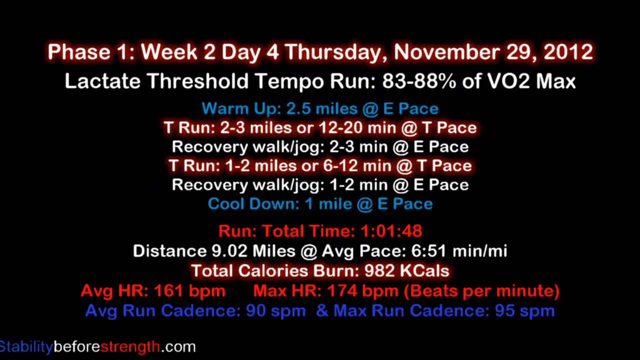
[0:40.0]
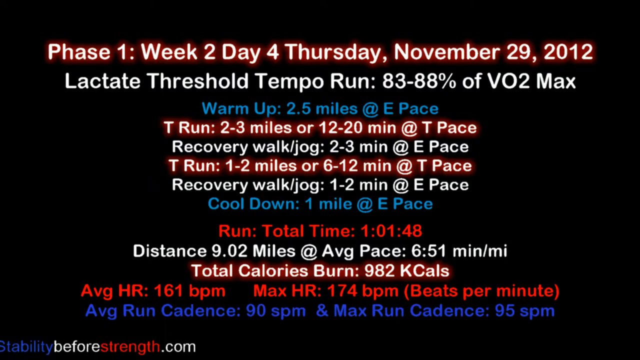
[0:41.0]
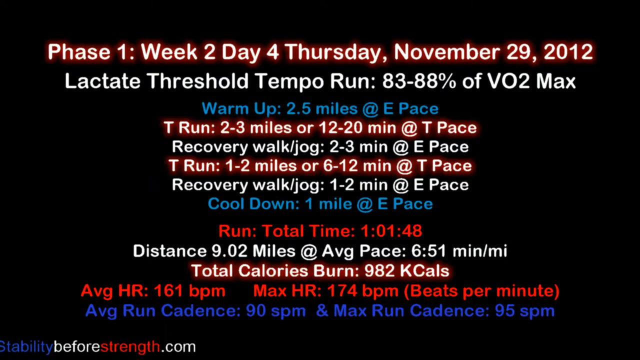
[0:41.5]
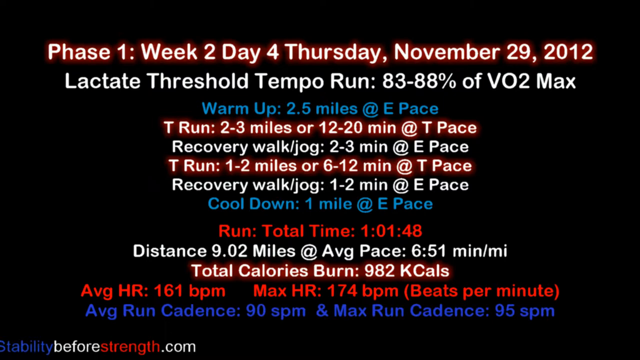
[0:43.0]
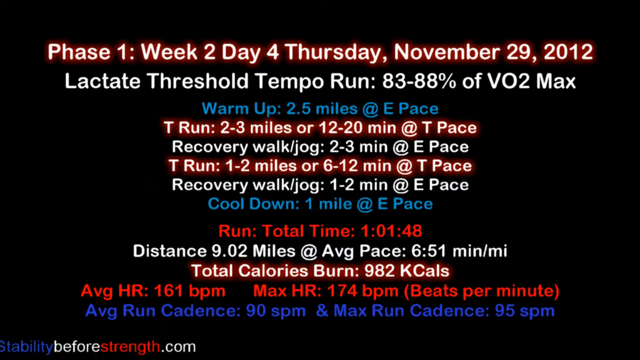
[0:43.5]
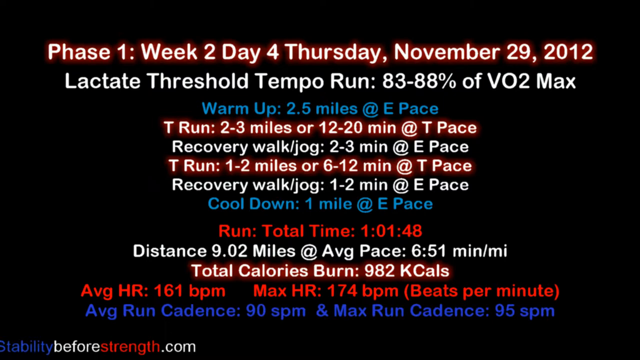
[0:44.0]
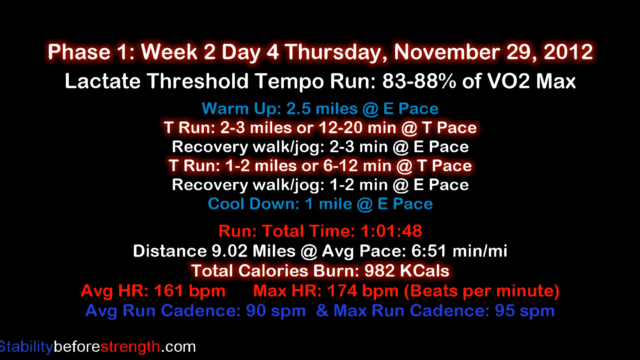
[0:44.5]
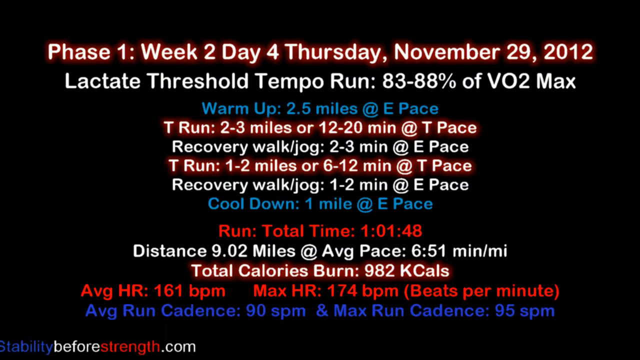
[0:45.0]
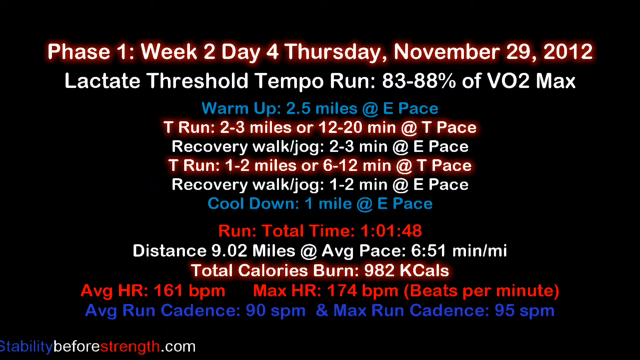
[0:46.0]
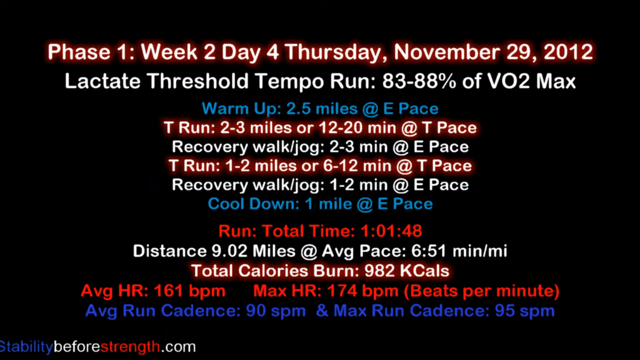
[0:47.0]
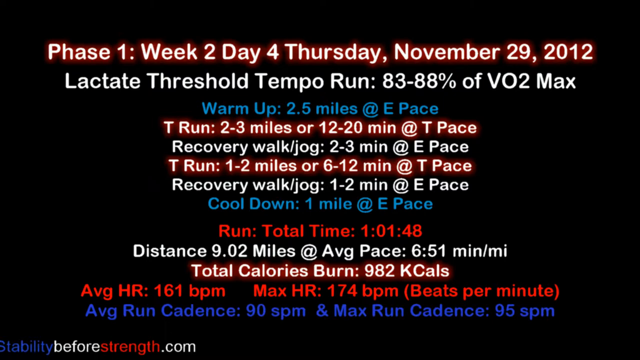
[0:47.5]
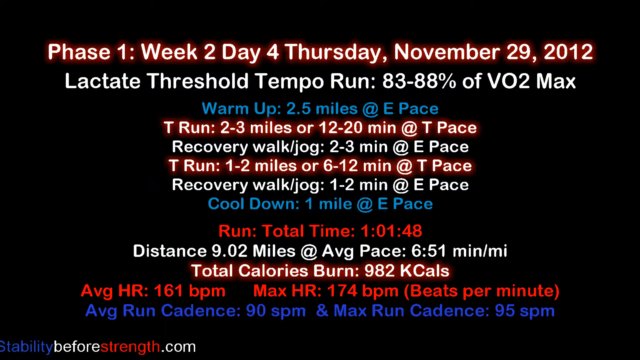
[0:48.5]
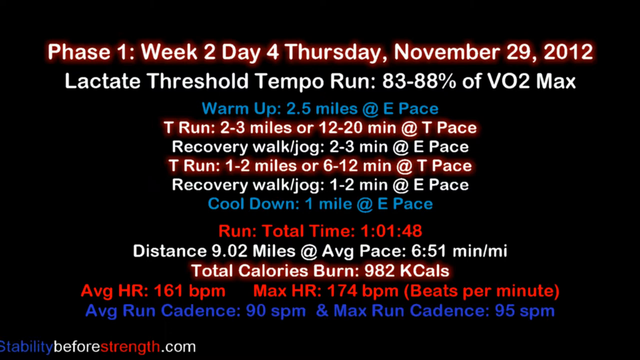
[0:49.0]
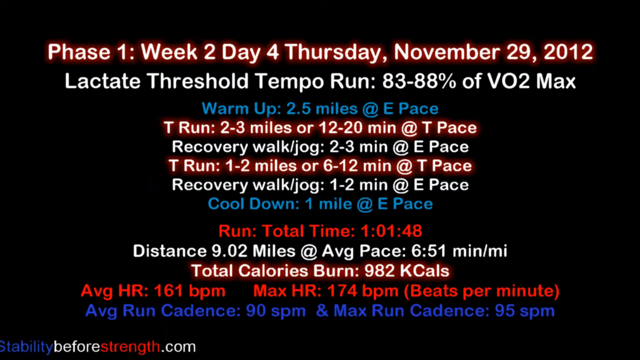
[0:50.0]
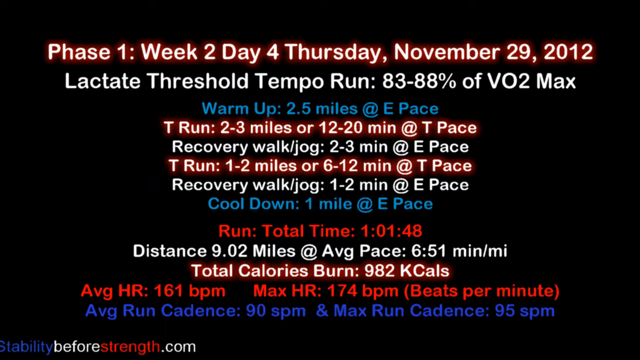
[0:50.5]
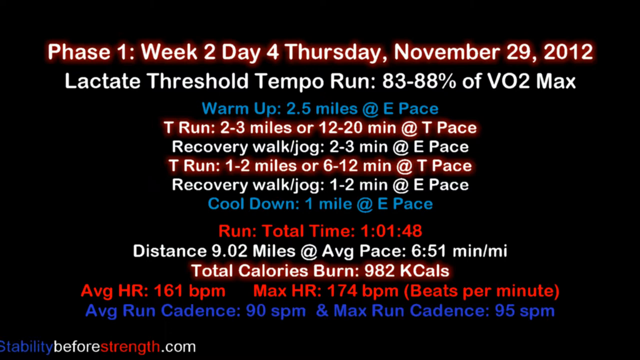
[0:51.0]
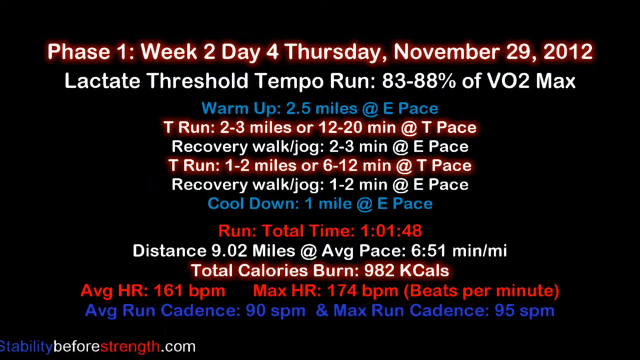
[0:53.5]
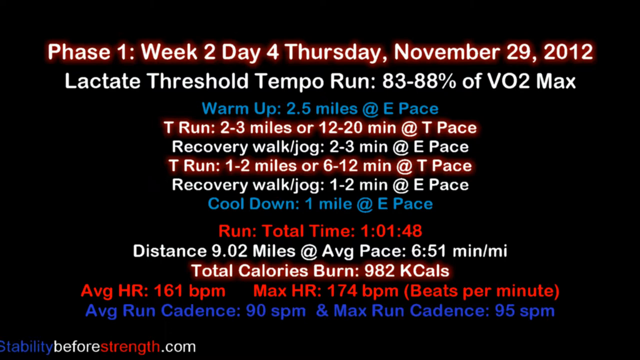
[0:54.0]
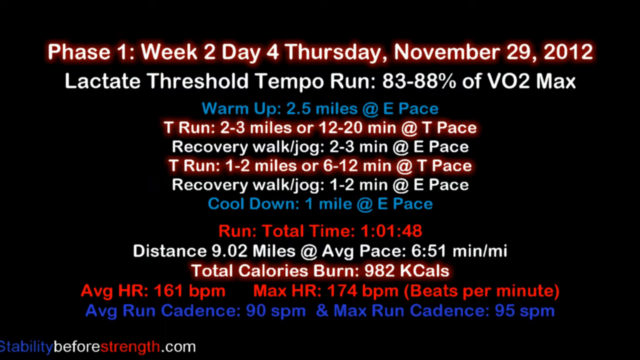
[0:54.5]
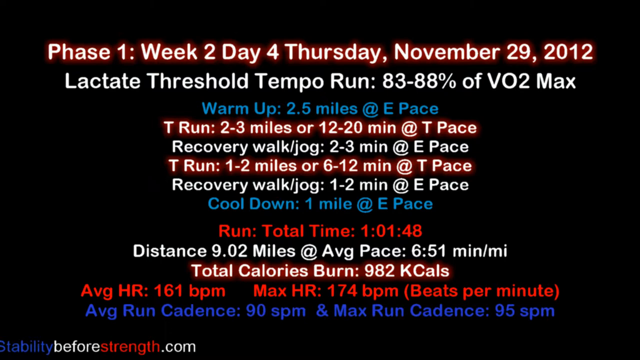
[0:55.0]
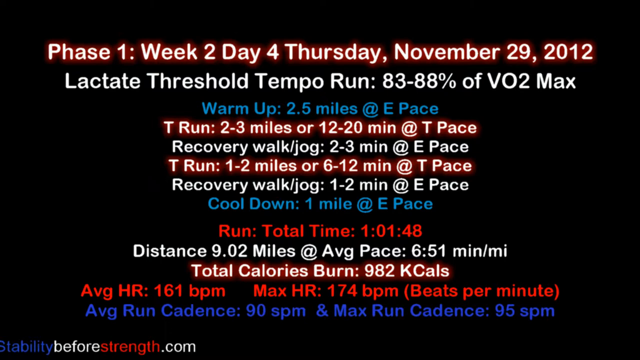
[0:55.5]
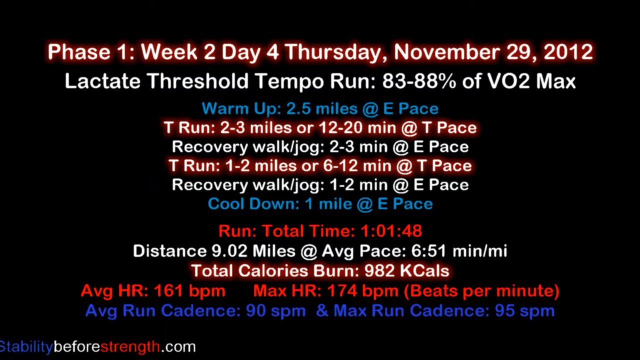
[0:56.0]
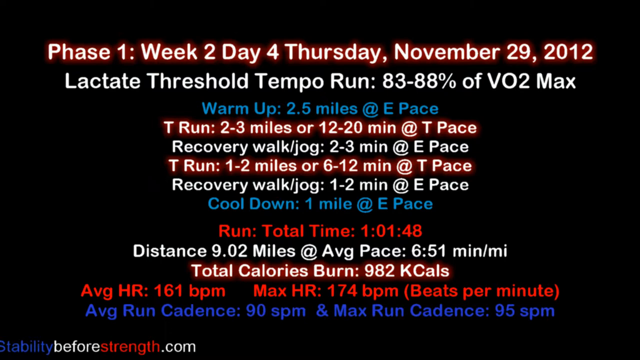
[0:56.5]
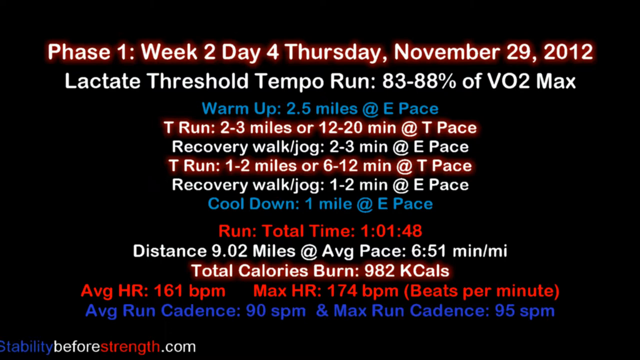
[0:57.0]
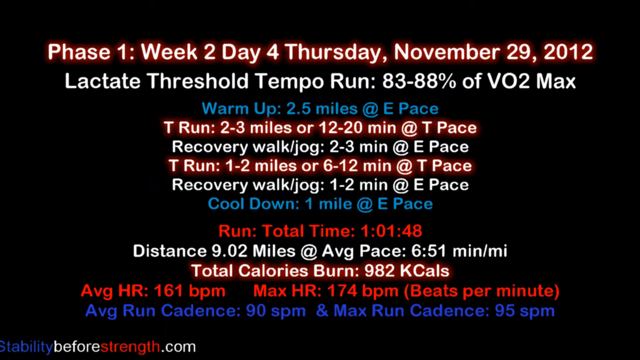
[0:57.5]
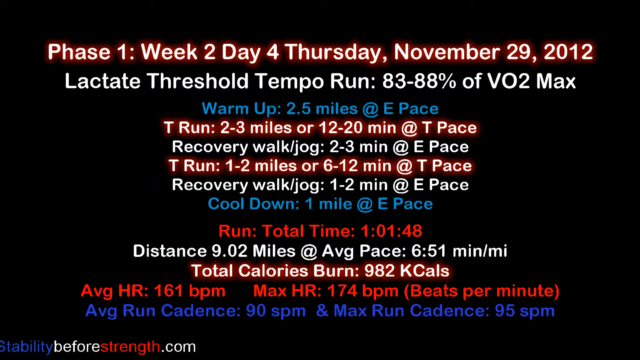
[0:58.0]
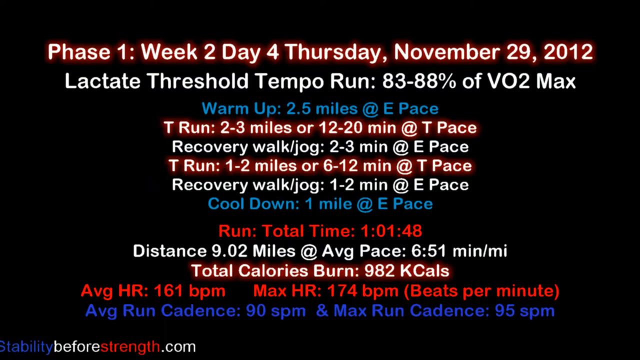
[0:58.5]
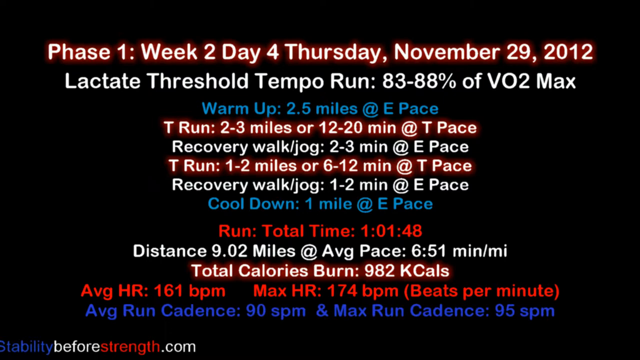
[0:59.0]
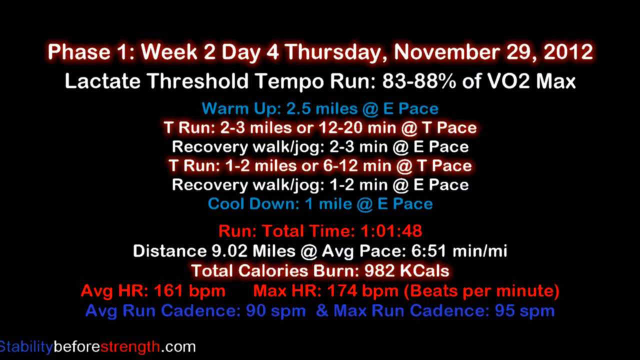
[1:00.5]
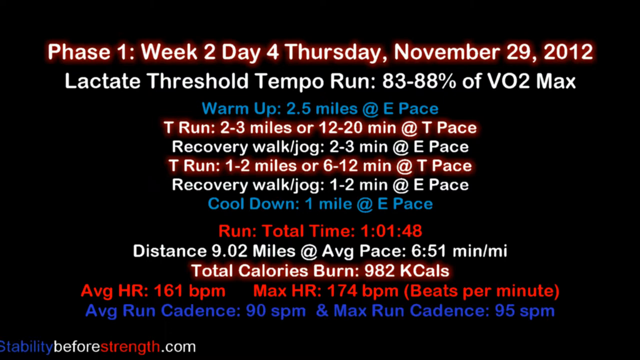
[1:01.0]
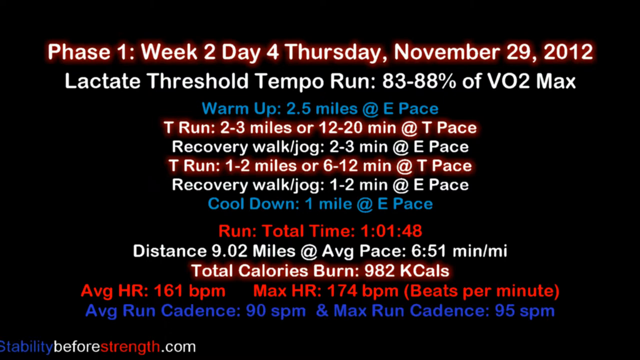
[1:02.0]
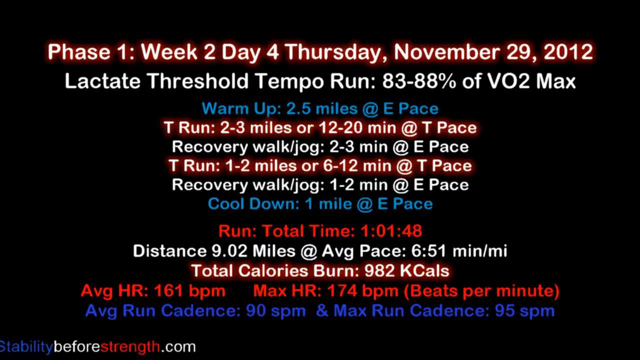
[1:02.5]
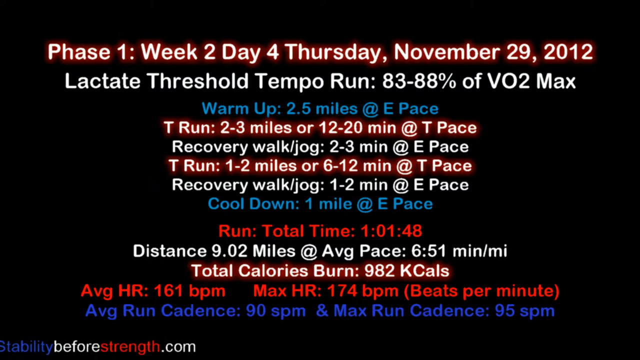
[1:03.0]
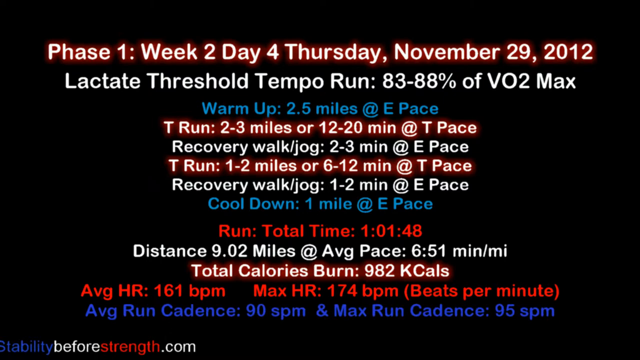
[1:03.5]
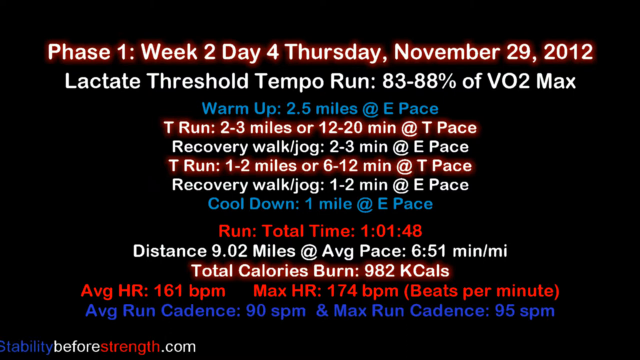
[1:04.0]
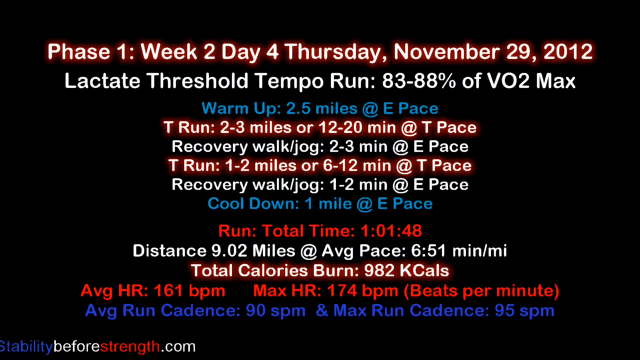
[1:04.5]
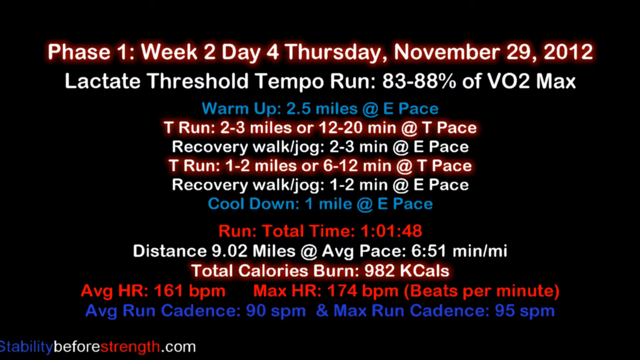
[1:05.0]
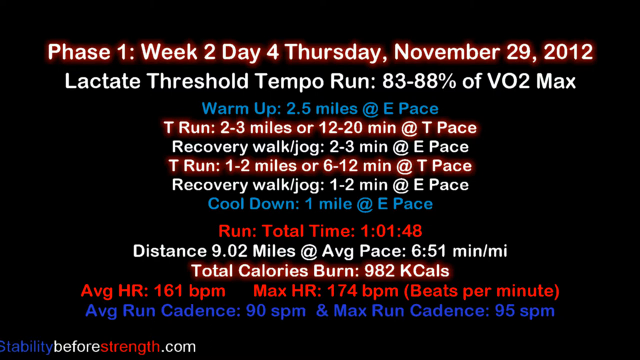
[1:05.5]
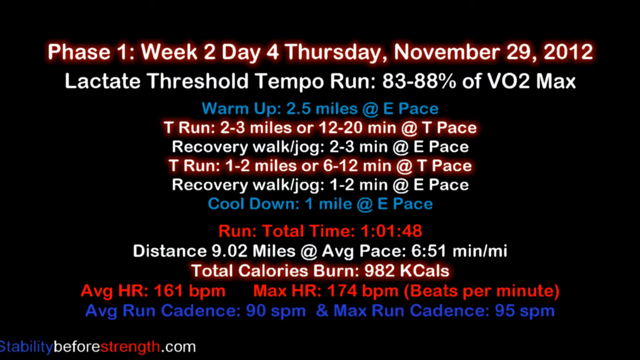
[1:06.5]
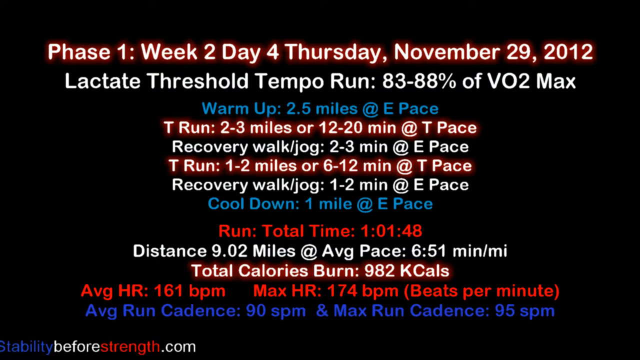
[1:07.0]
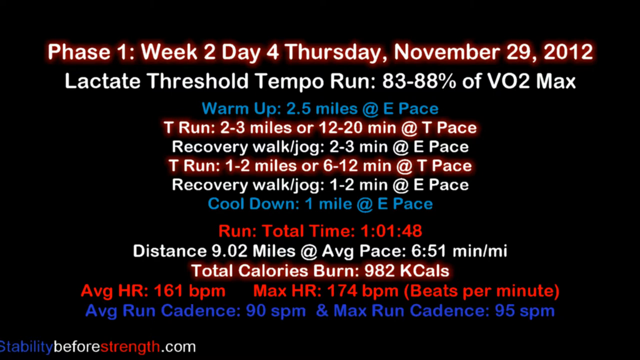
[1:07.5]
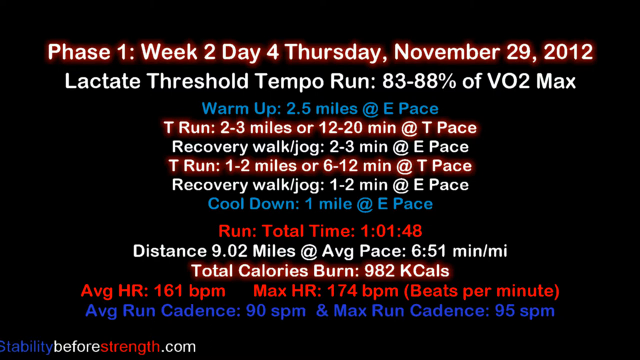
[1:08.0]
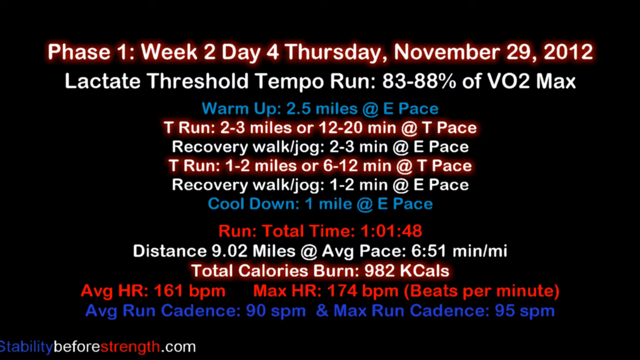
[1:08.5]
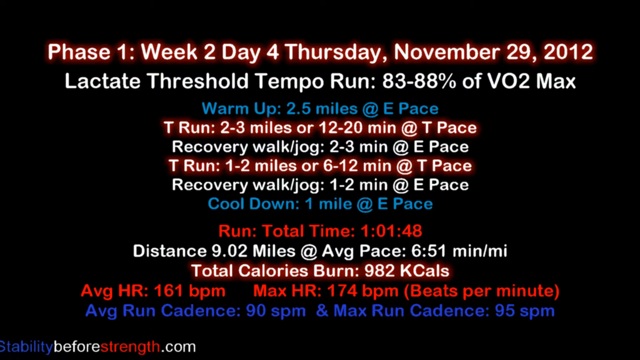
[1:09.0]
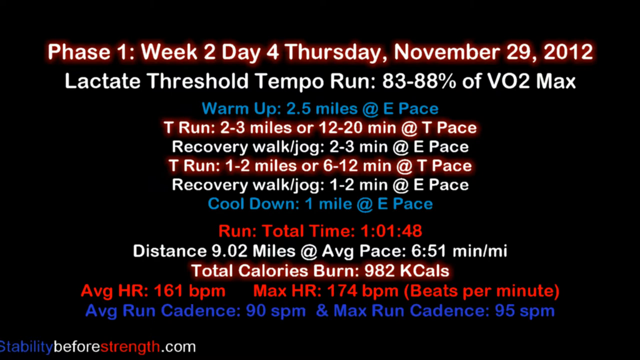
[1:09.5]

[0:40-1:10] The screen stays on this phase one information screen for quite a while, on a plain black background. In the bottom left is "stabilitybeforestrength.com", with "stability" in blue, "before" in white, "strength" in red and ".com" in white. Some of the font is white with a red glow, some is a light, kind of aqua blue, some is plain white and some is a bright solid red; at the bottom there is a line in a darker blue. Among the lots of information, the screen apparently gives a total run time of 1 hour, 1 minute and 48 seconds. The distance is 9.02 miles with an average pace of 6 minutes 51 seconds. The average heart rate is 161 BPM, the maximum heart rate is 174 BPM, and the total calories burned is 982 calories.